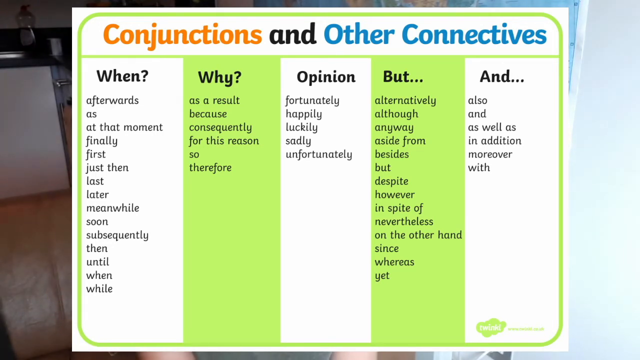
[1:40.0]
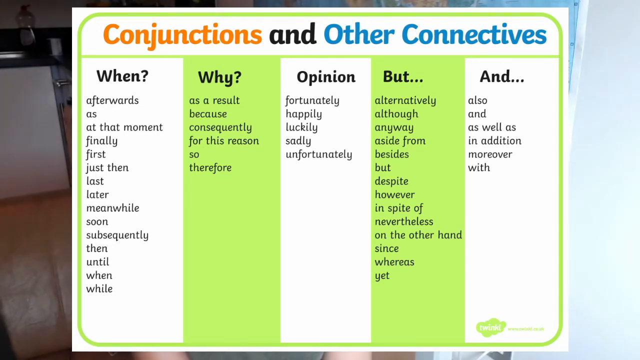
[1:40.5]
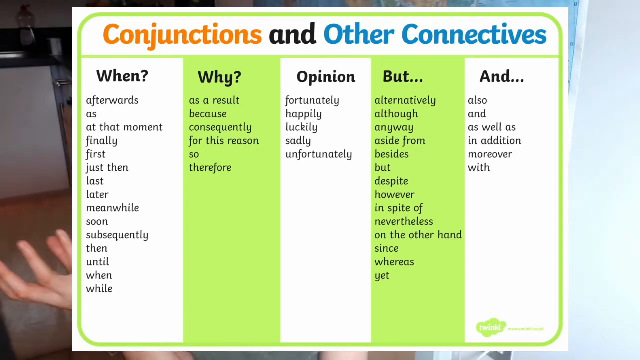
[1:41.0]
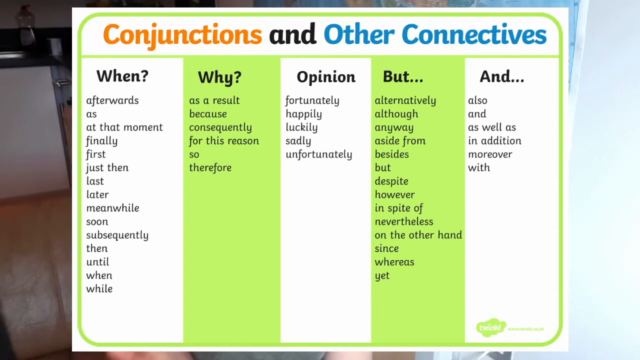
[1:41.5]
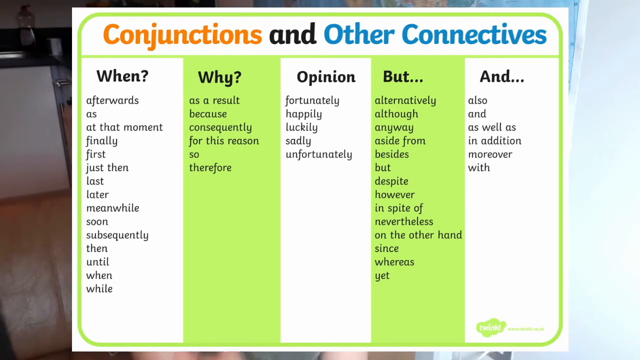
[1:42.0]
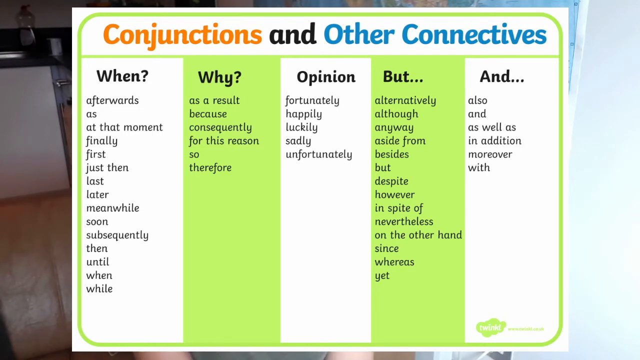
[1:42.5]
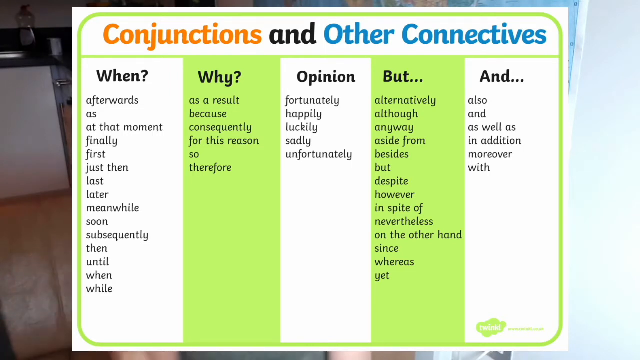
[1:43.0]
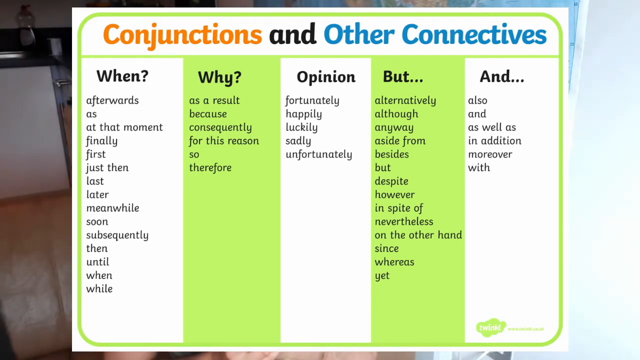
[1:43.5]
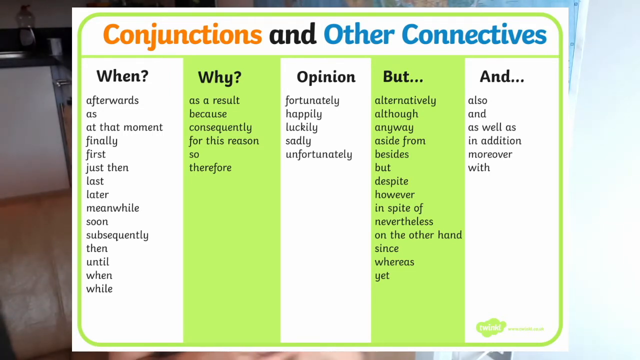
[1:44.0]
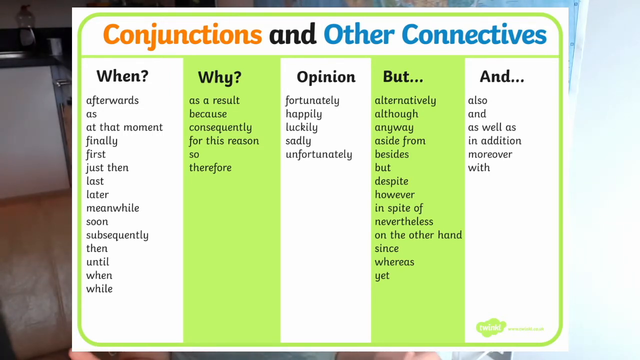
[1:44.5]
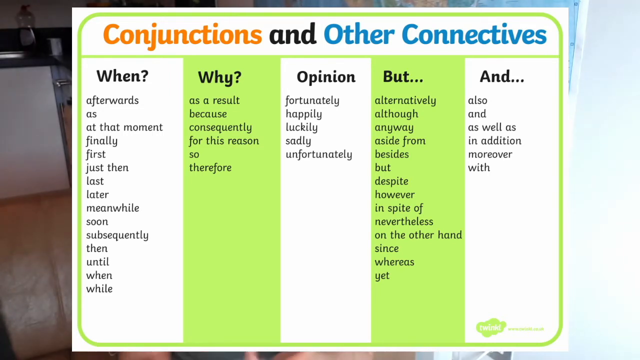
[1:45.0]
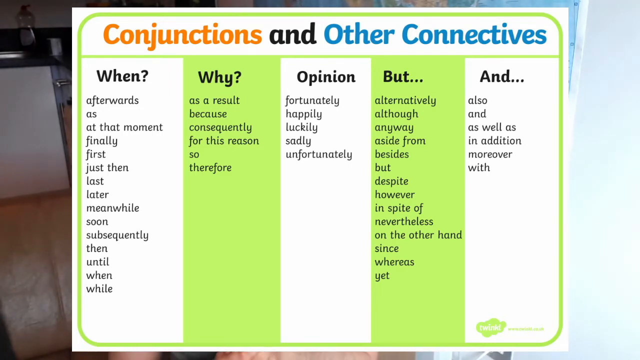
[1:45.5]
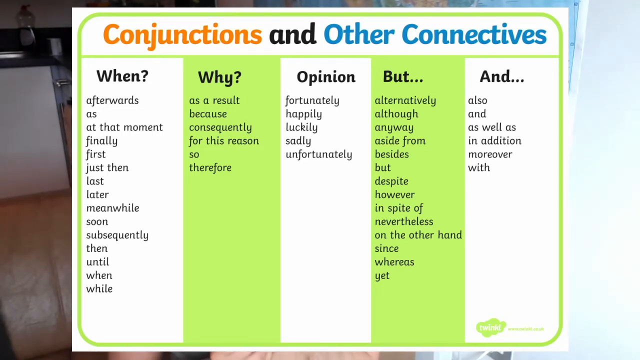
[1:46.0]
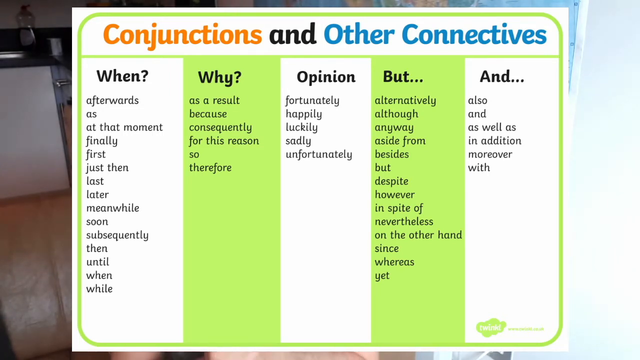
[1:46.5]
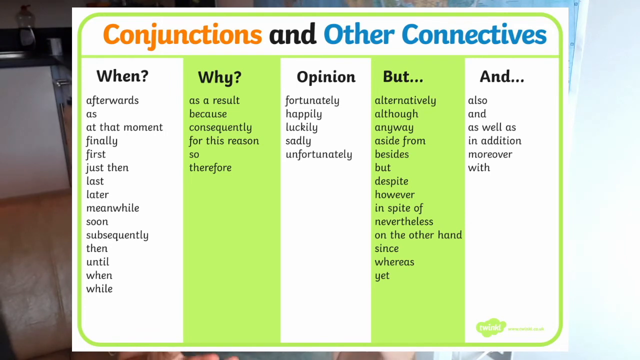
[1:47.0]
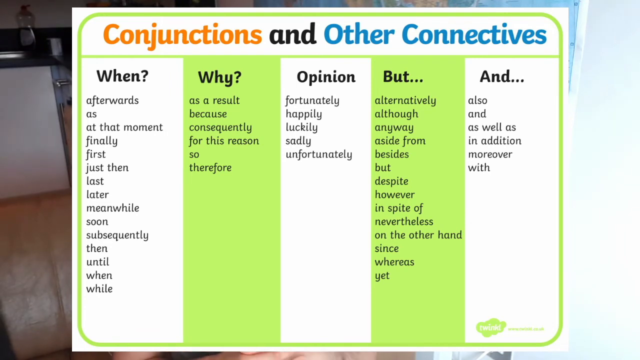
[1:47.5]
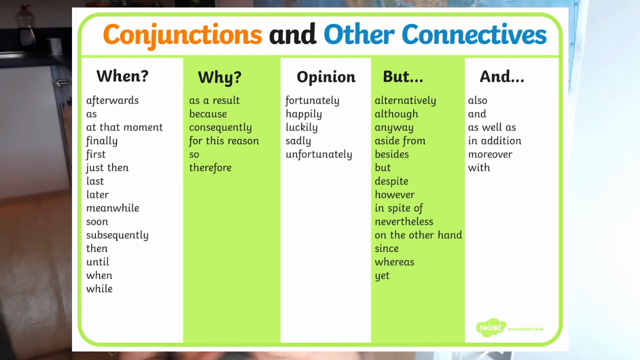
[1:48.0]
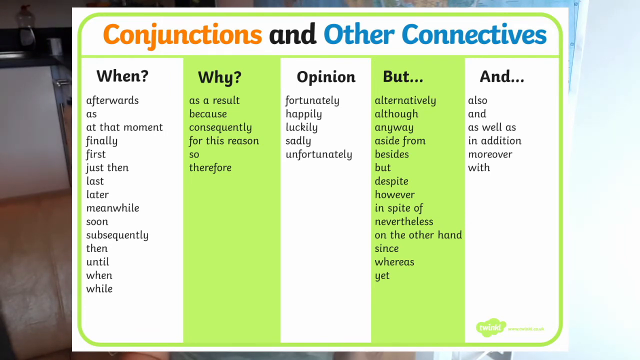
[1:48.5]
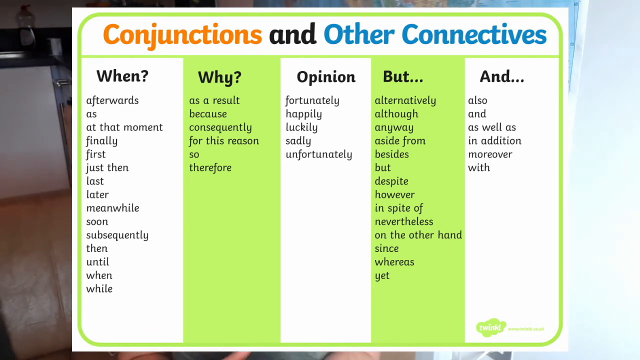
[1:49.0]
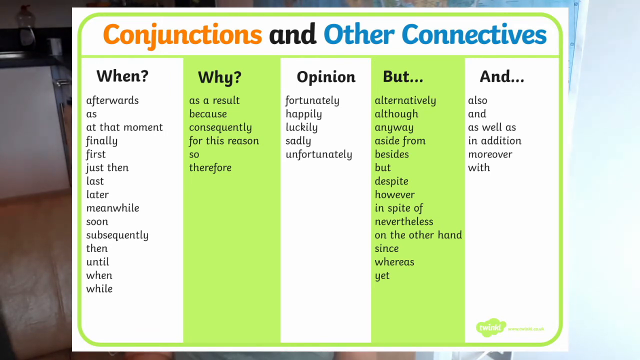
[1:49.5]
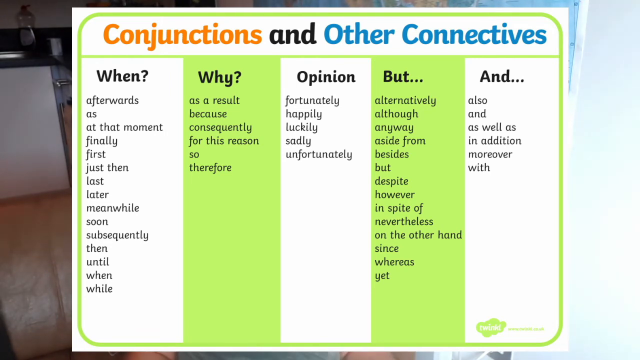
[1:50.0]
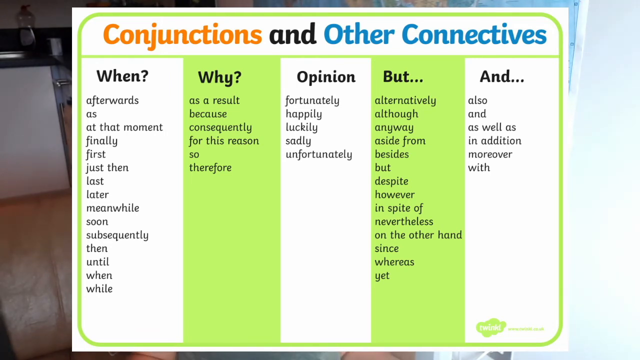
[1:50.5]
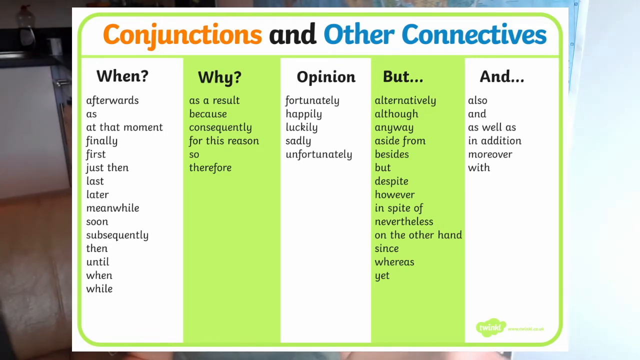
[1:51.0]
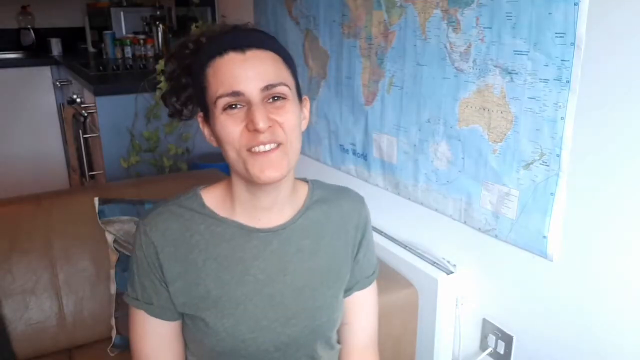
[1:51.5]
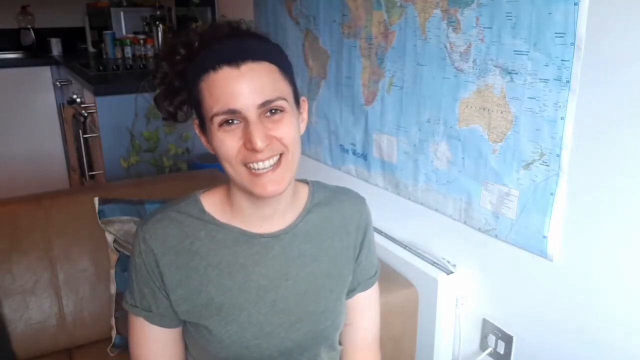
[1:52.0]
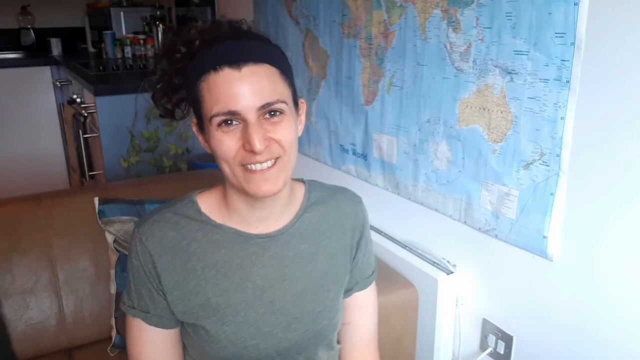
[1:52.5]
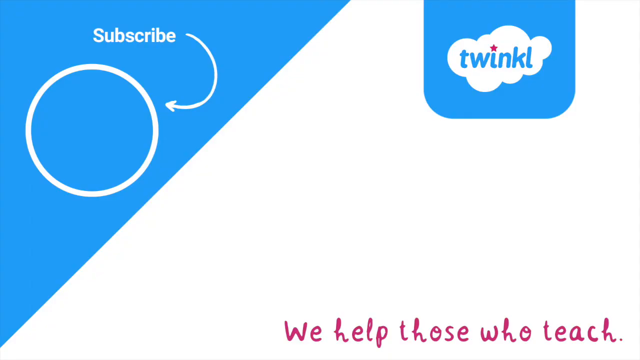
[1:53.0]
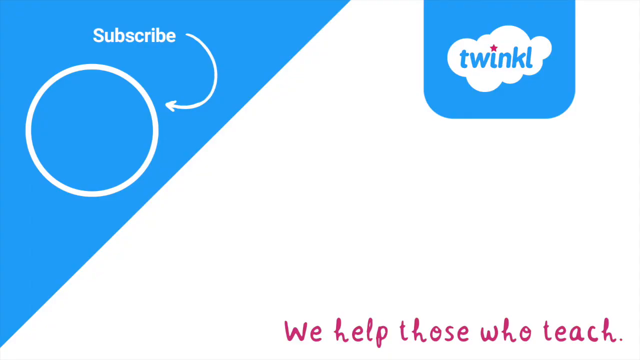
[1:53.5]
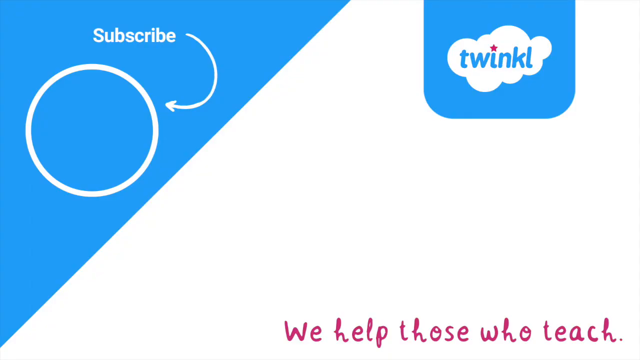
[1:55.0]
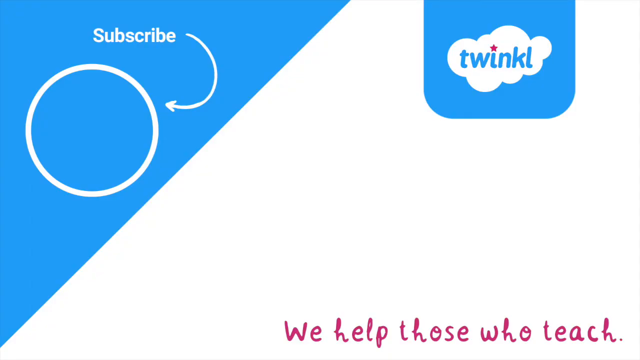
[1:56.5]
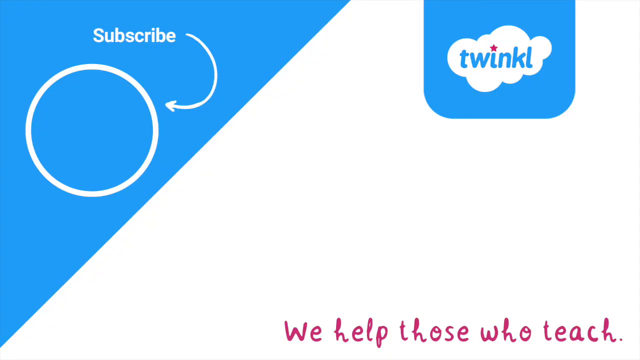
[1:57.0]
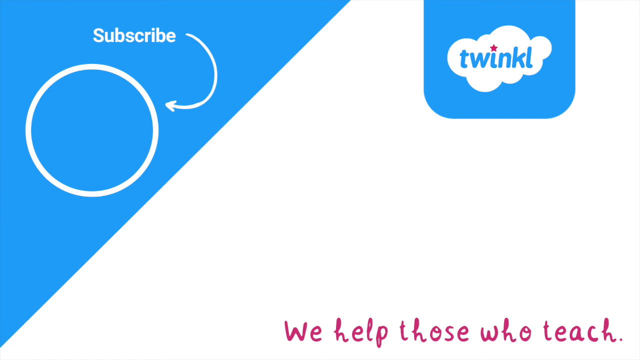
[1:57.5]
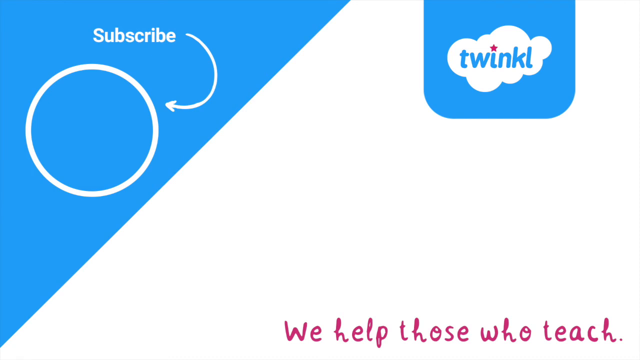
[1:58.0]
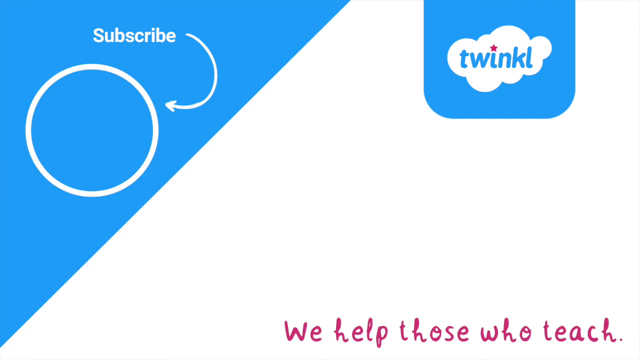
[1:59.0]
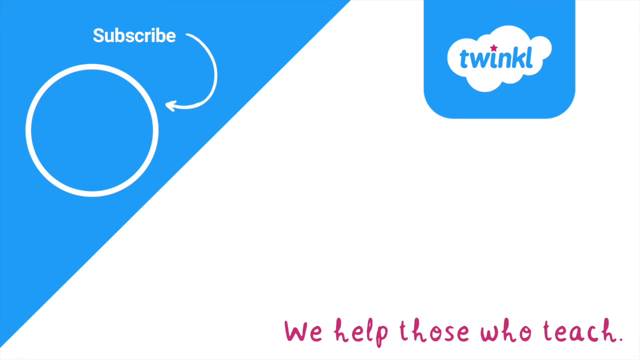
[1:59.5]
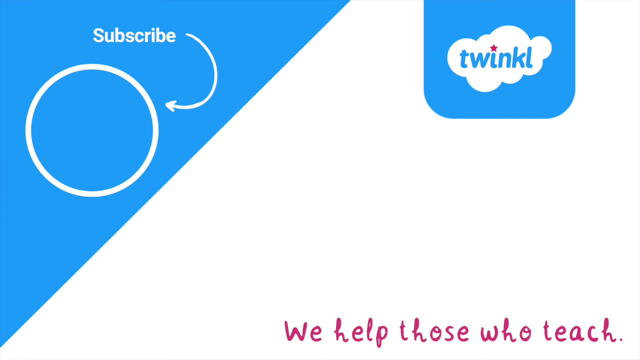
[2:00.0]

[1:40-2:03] The chart of conjunctions and other connectives is shown, with words for when, why, opinion, but, and and. Among the words for when are first, last, soon, then, and finally; for why, because, so, for this reason, and therefore; for opinion, fortunately, luckily, sadly, and happily; for but, although, however, and whereas; and for and, also and in addition. The woman talks about the chart behind her. At the end she says something like "we help those who teach Twinkle, subscribe."